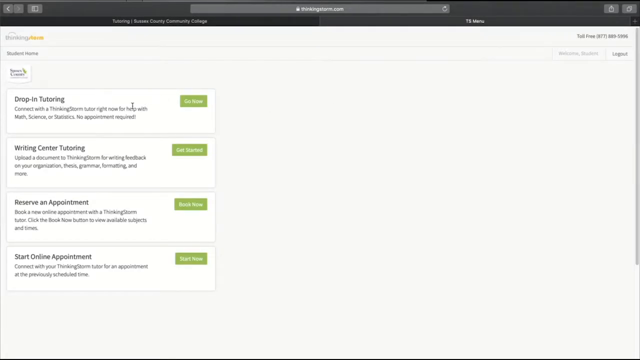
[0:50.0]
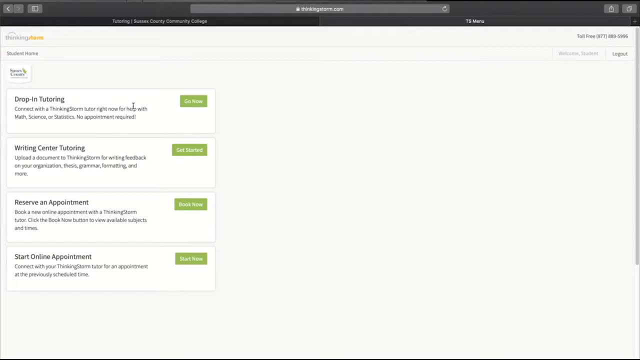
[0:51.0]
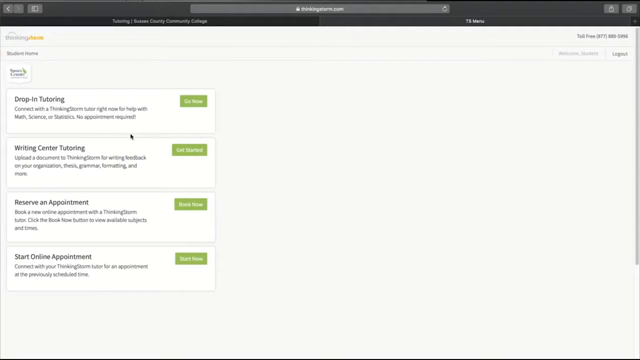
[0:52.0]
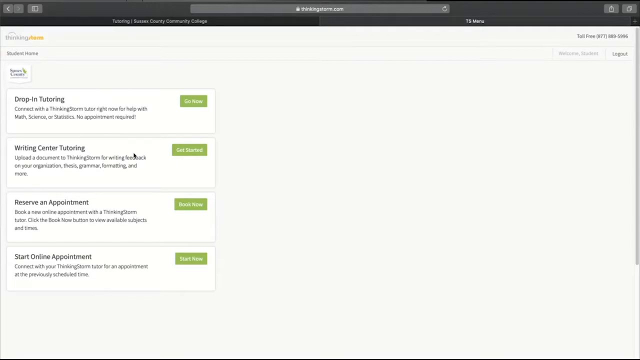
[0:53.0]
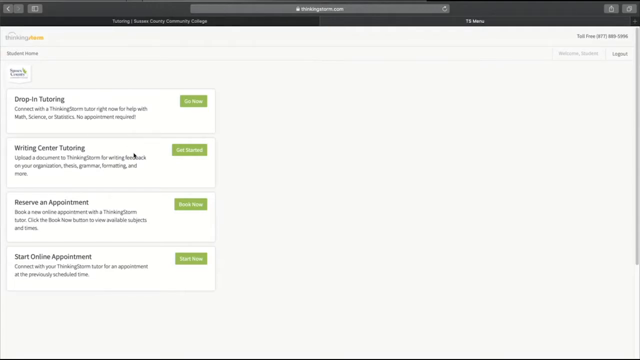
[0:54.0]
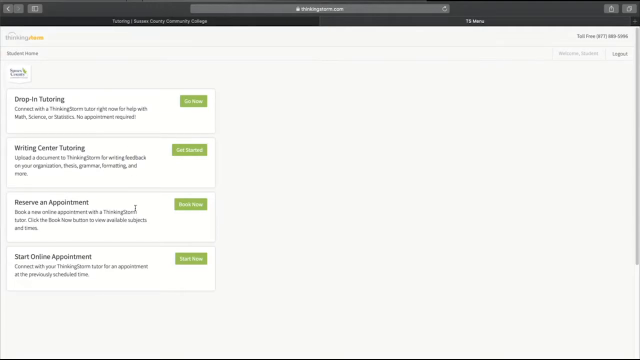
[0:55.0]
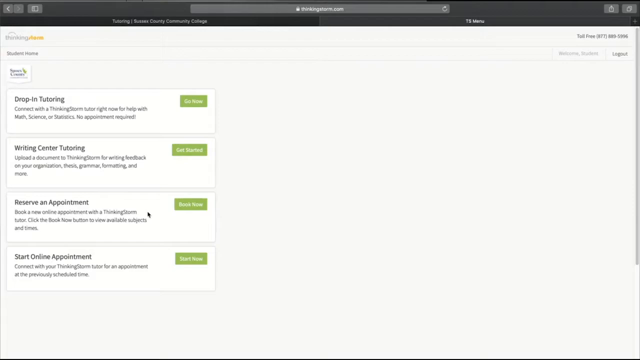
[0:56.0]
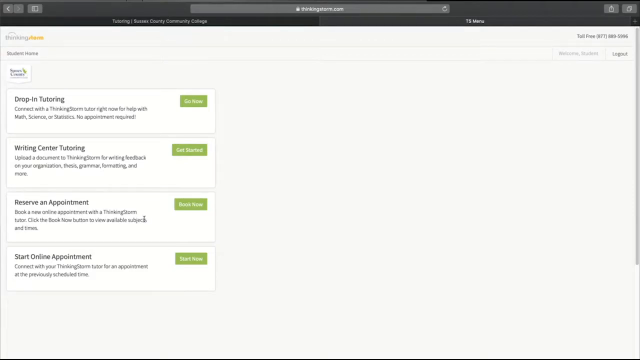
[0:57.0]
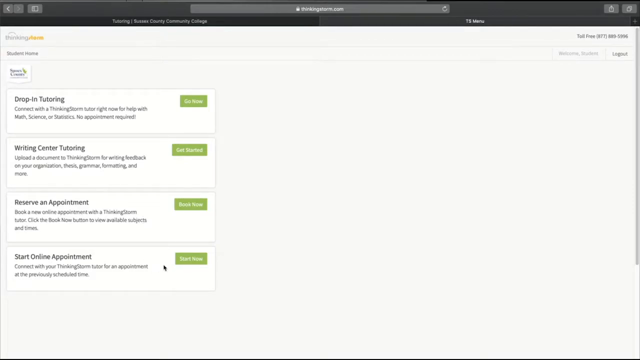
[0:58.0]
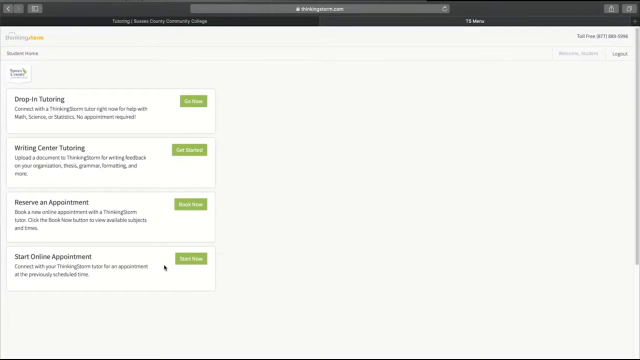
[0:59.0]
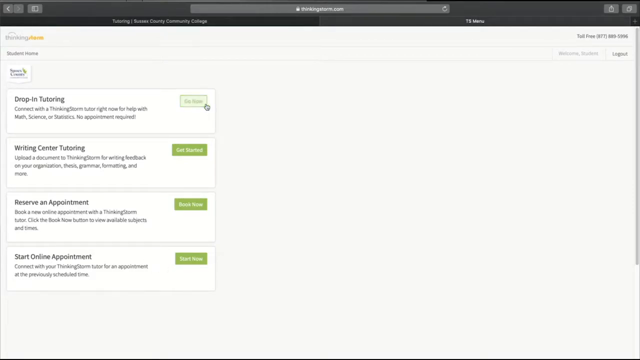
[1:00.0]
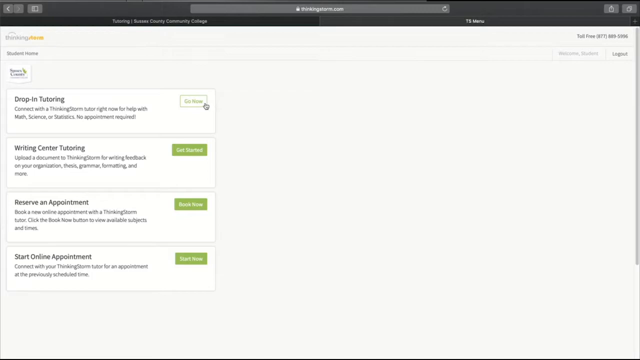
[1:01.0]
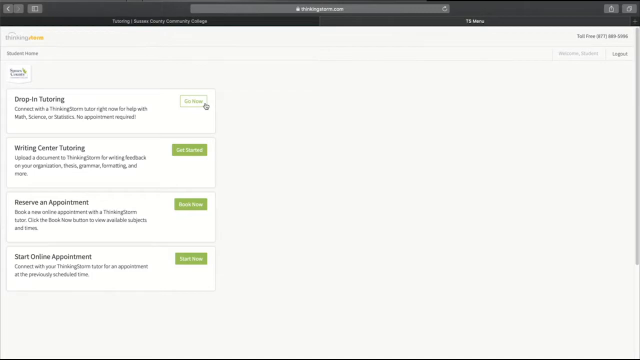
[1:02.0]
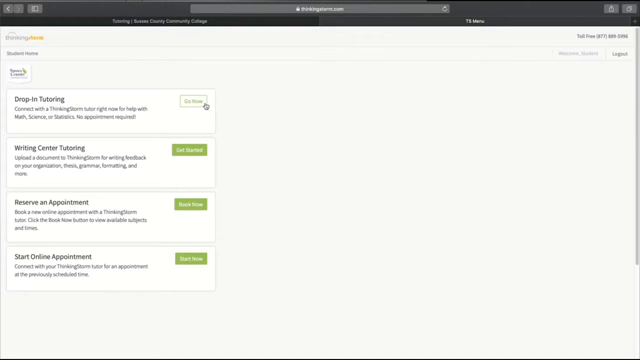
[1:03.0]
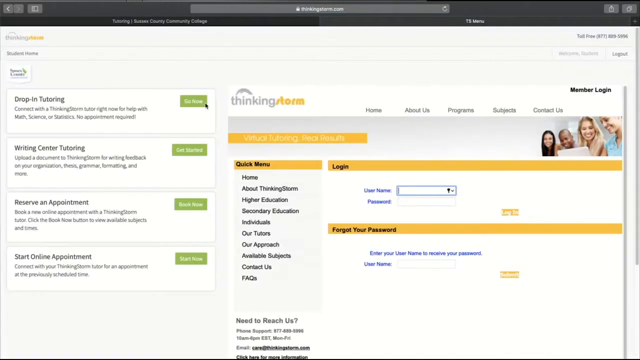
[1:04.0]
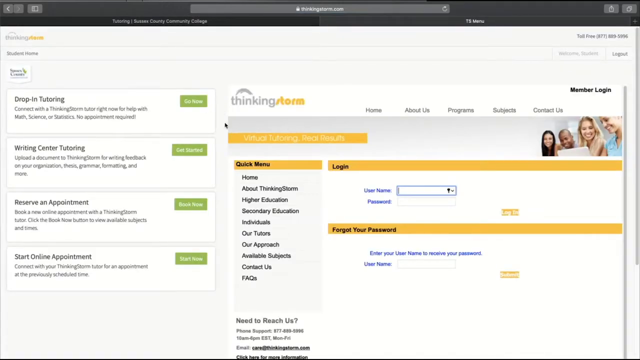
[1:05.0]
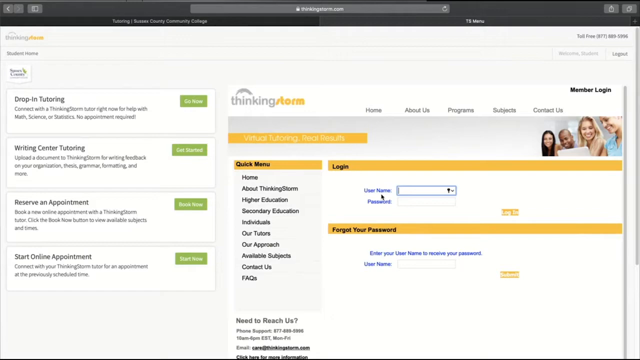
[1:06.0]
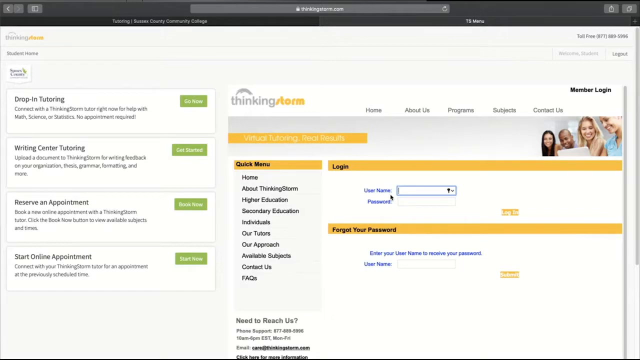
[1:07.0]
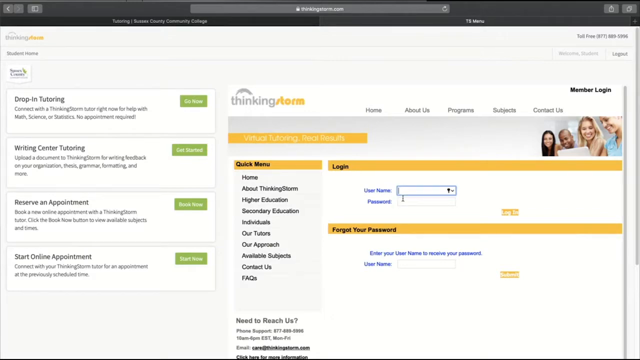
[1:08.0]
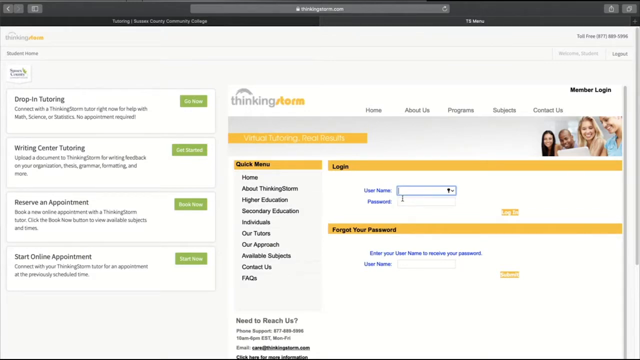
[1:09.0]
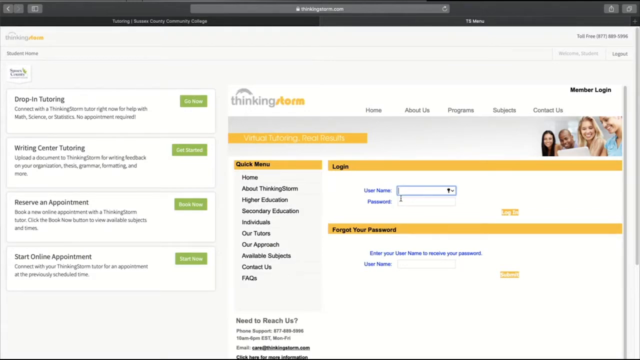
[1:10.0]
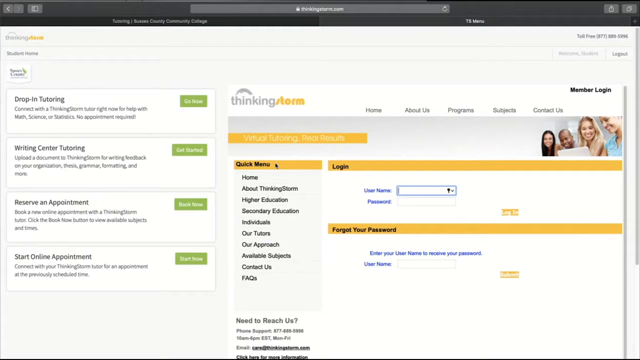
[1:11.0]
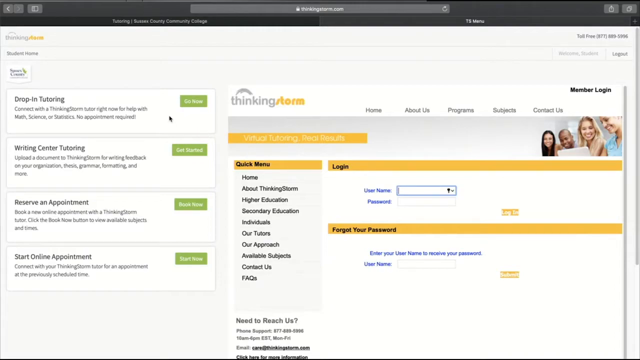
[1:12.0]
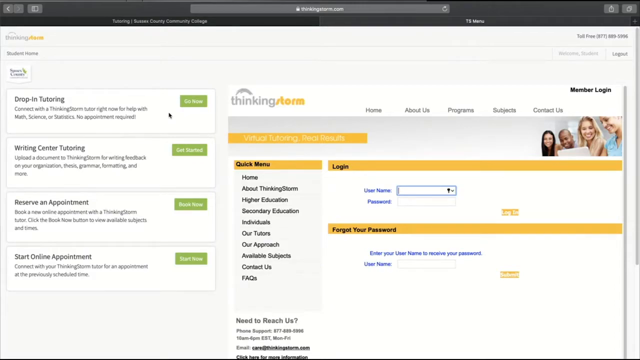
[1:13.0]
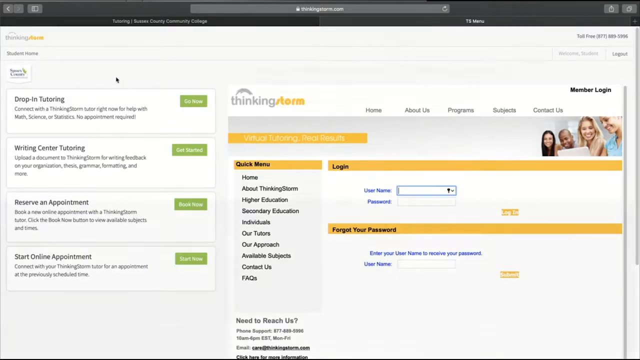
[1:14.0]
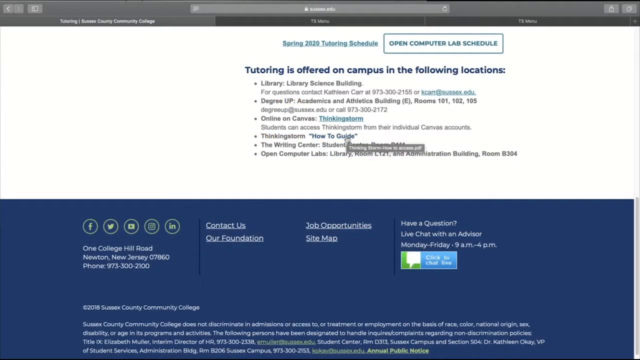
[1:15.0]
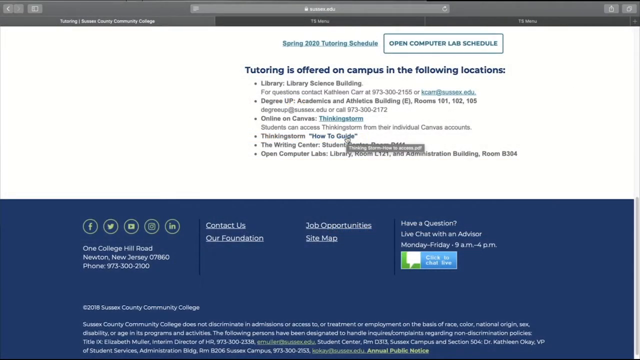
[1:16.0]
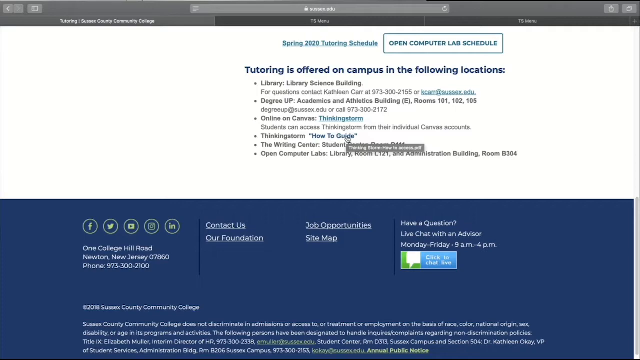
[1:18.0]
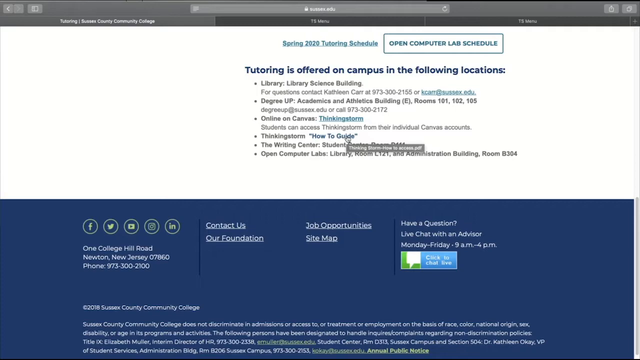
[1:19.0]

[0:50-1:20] The site thinkingstorm.com offers two types of tutoring. Drop-in tutoring connects users with ThinkingStorm tutors for help with math, science and statistics, with no appointment required. Writing center tutoring lets users upload documents to ThinkingStorm and wait for written feedback on their thesis, grammar, formatting and more. Two other buttons are available: one for reserving an appointment, apparently in person, and one for reserving an online appointment, for a tutoring session held over the internet. After a while the person clicks on the tab called drop-in tutoring and is directed to the site's login screen, since drop-in tutoring requires being logged in.